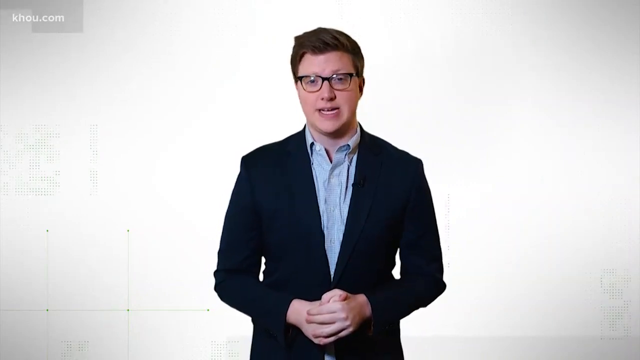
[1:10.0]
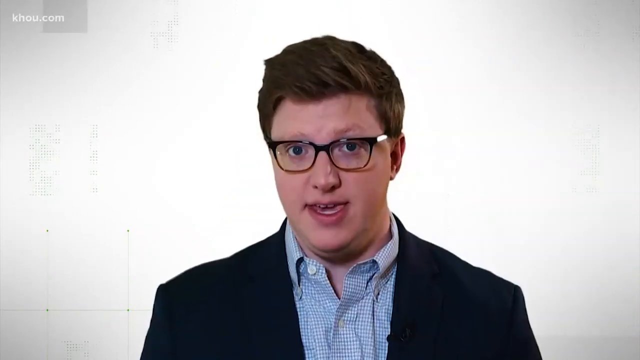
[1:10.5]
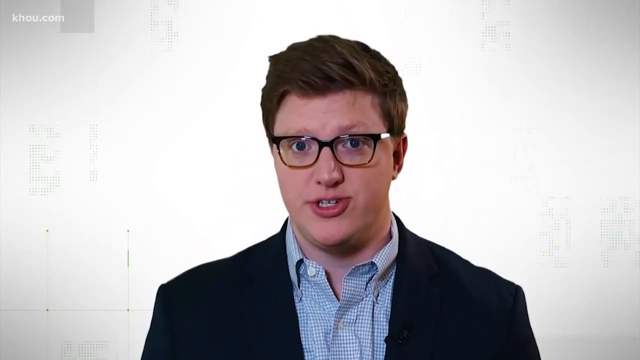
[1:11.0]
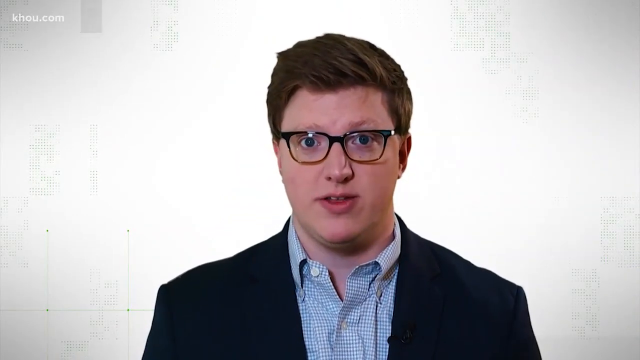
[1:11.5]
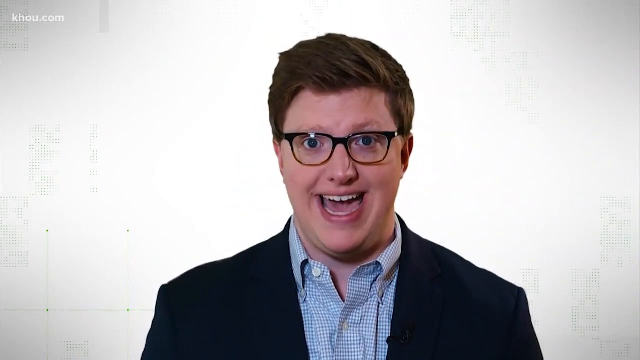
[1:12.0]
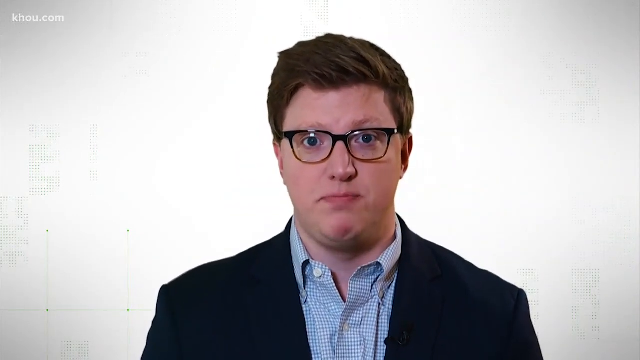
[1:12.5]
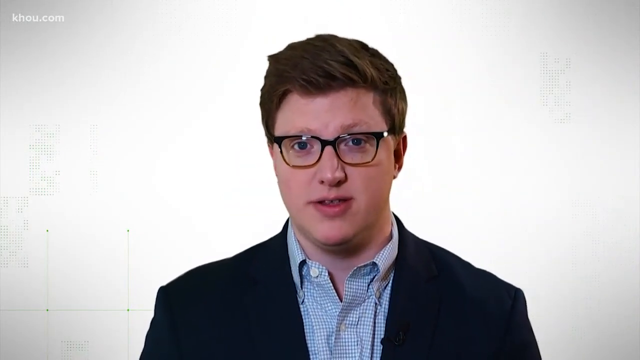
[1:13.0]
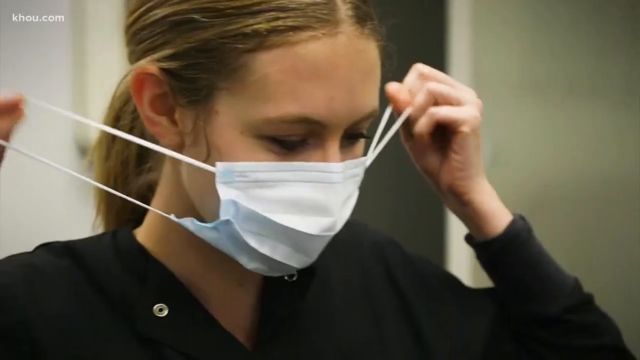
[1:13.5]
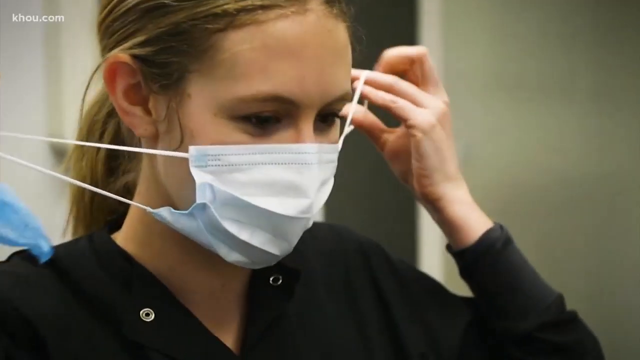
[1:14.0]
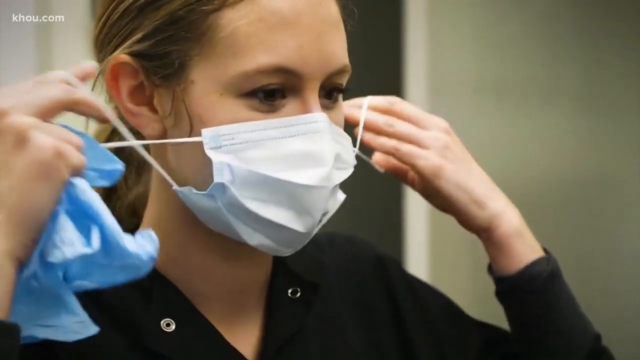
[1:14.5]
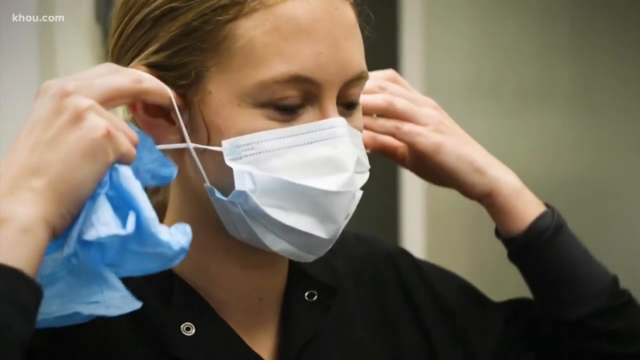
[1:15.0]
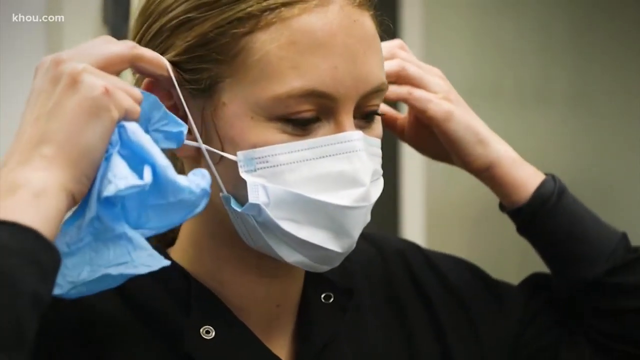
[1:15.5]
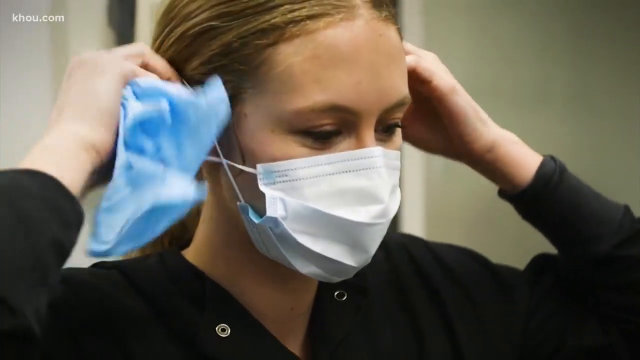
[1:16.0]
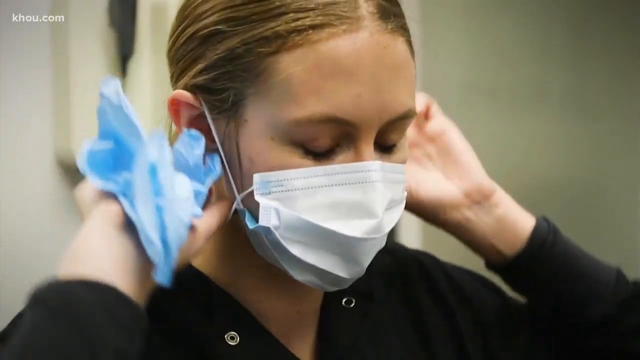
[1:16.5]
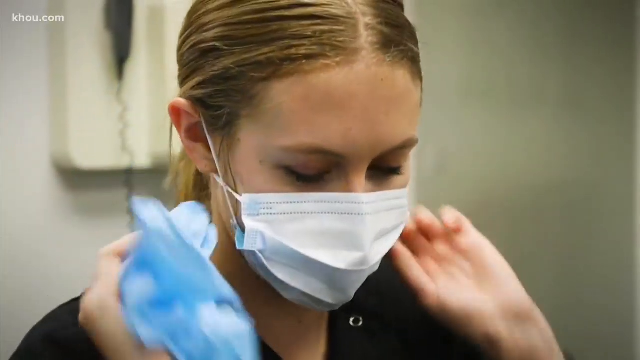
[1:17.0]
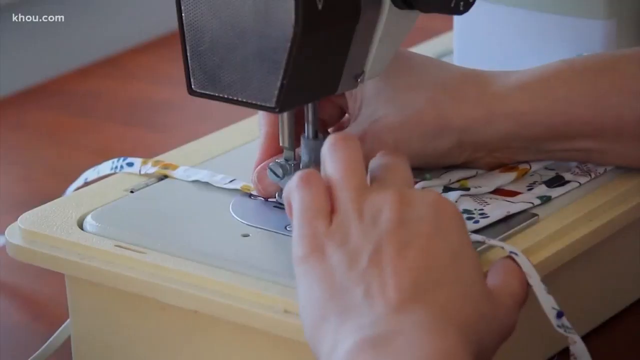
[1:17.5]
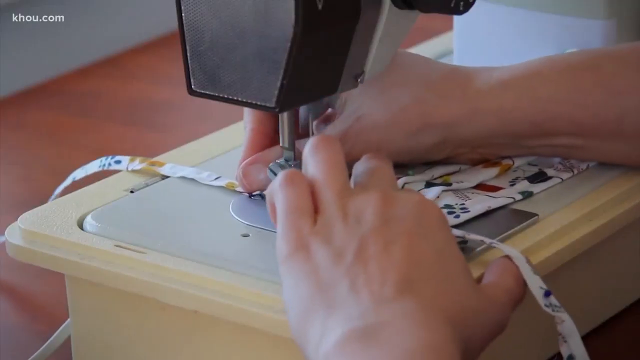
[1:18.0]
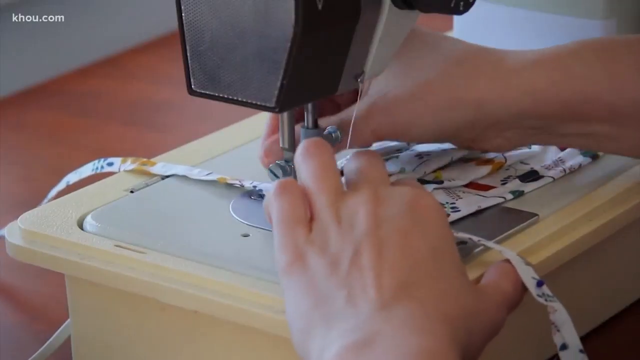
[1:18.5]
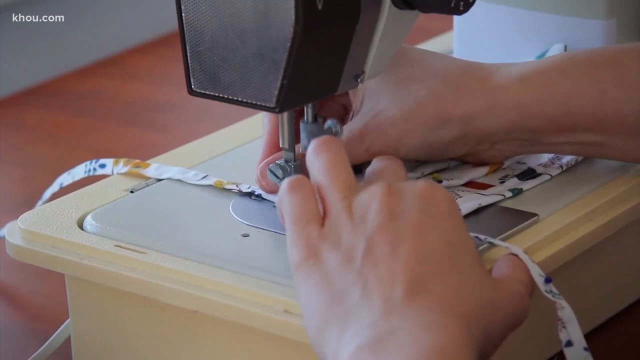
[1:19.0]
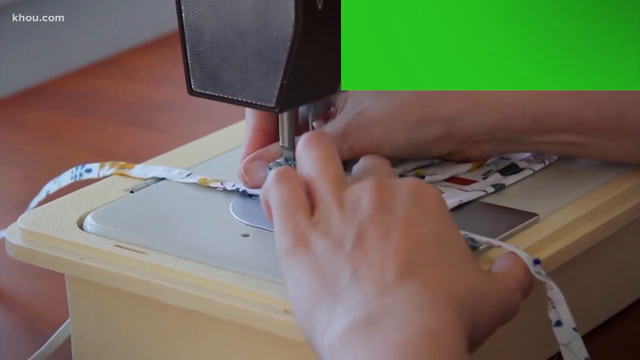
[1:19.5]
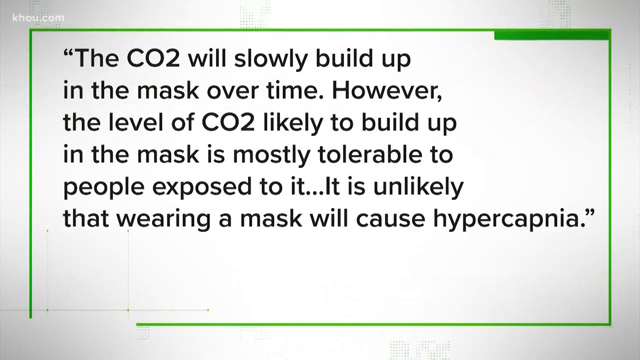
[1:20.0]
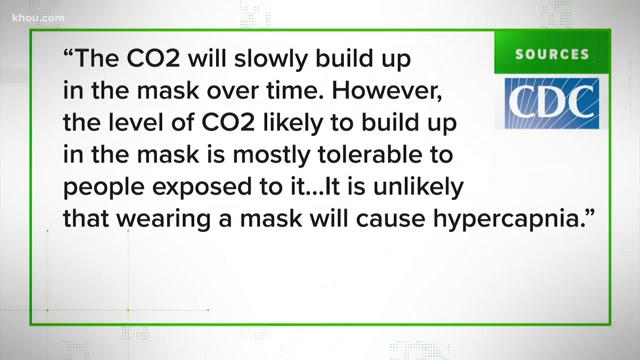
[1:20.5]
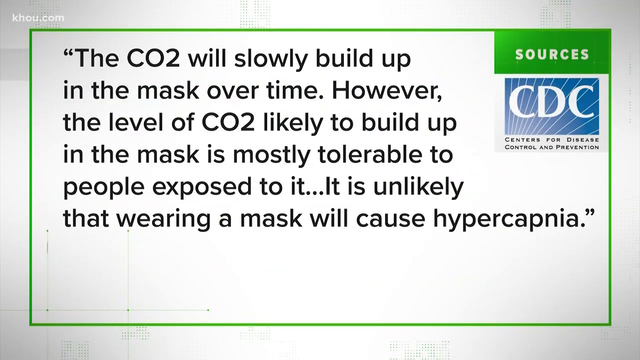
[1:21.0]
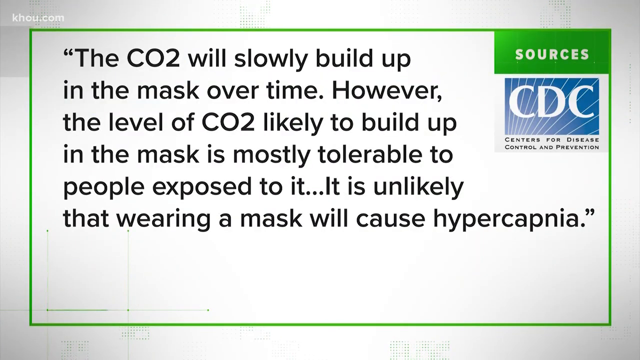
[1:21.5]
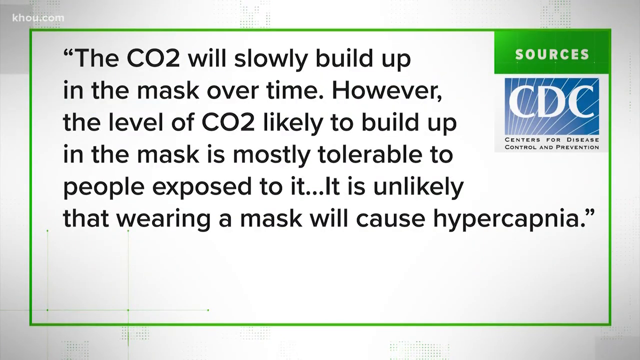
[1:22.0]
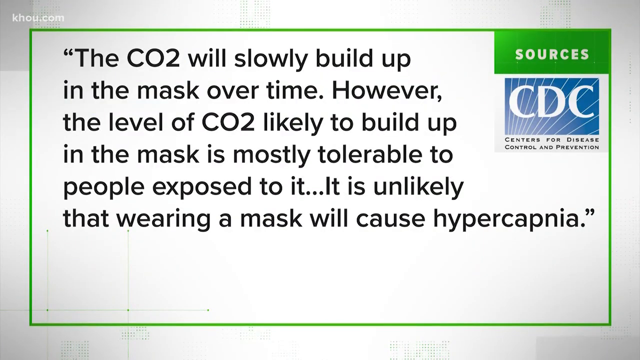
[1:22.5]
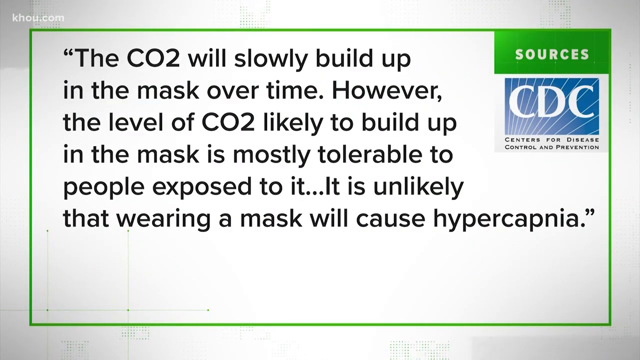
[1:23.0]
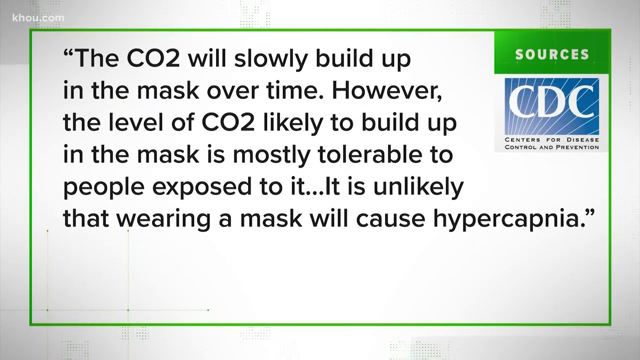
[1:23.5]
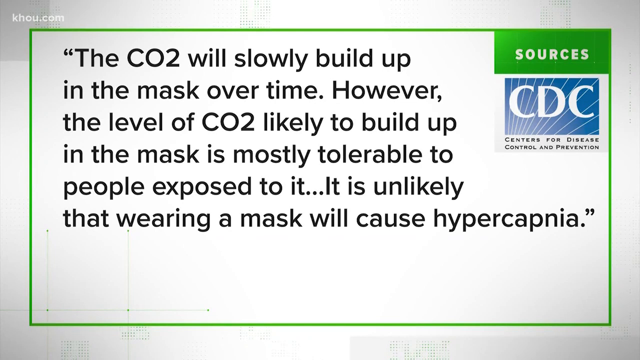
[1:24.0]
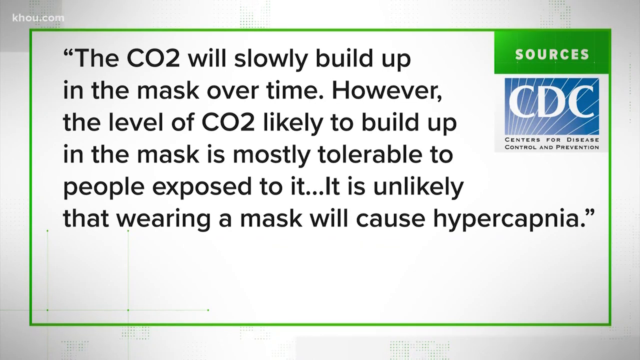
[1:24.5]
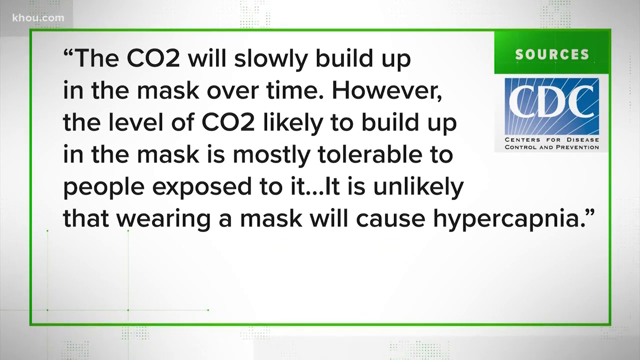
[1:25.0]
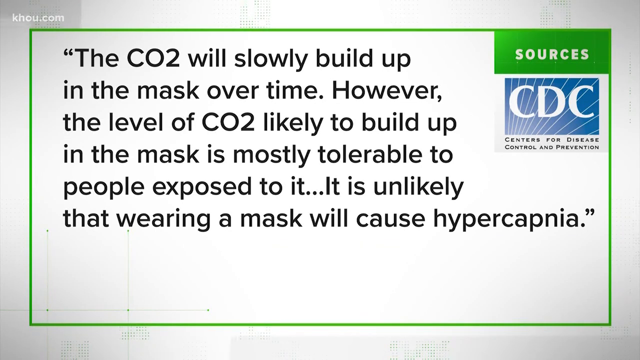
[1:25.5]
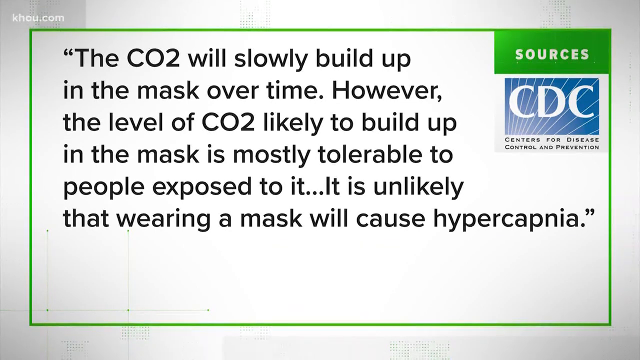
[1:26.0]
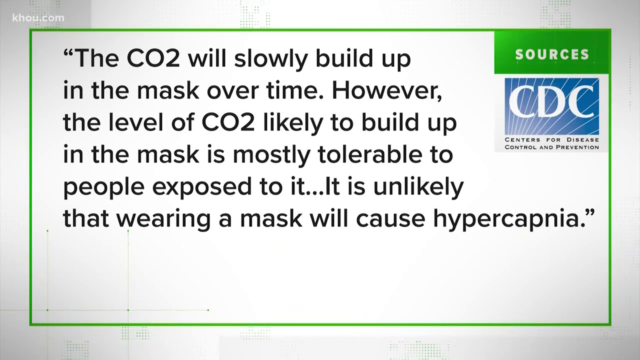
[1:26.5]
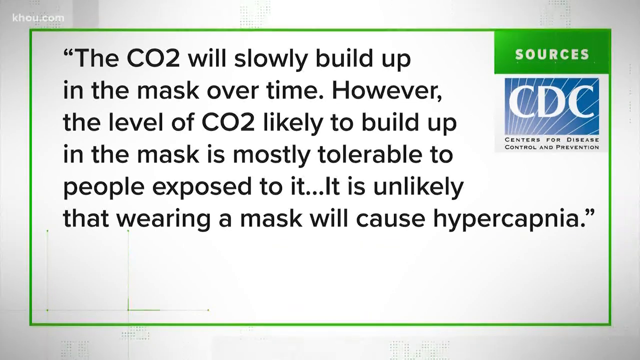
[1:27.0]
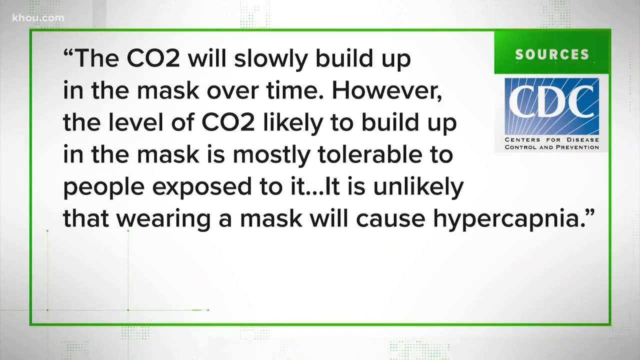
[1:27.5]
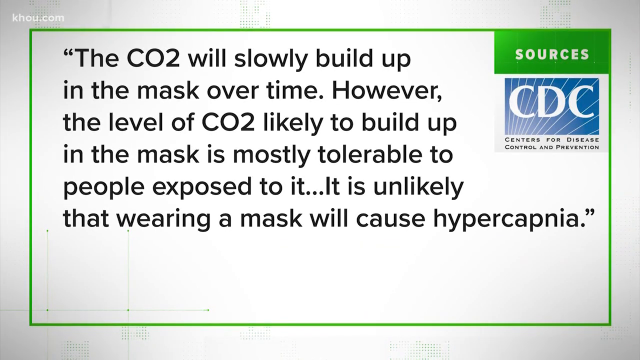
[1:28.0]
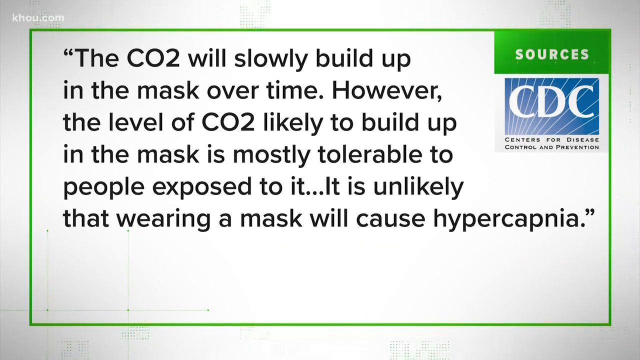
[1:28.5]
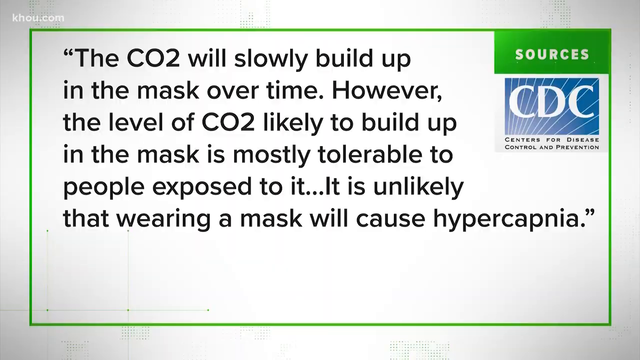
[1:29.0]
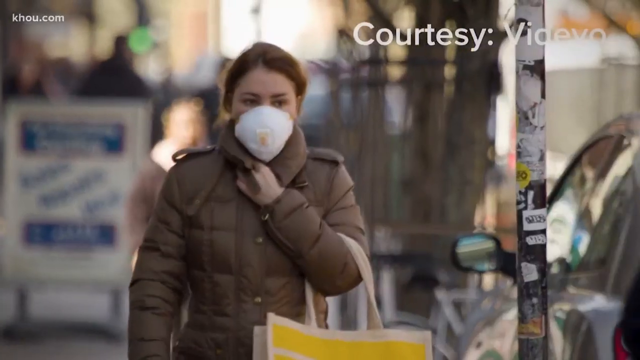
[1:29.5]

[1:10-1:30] The presenter starts in quite a zoomed-out shot showing his full top half, which then zooms in so only his shoulders and head are visible. He is probably in his 20s and wears a blue shirt, a black jacket and black glasses. The video cuts to a nurse putting a white mask on her face, tying its strings around her ears, with some gloves in her hand. Next, somebody on a sewing machine sews a mask together. The video cuts to more text that says "the CO2 will slowly build up in the mask over time", with a green border; in the top right, on a green background, white text says "sources", and underneath it says "CDC, Centre for Disease Control and Prevention" along with its logo. Small grey shapes move around the border. The video then cuts to a woman walking down the street wearing a mask.